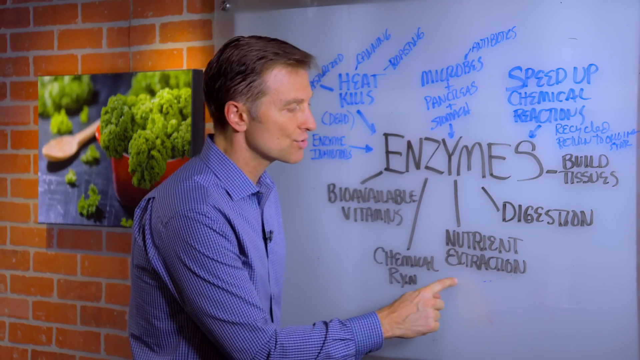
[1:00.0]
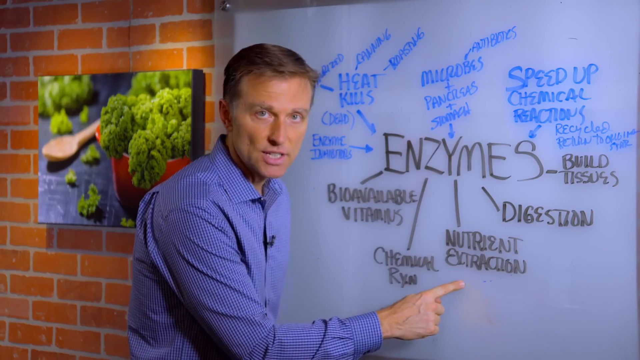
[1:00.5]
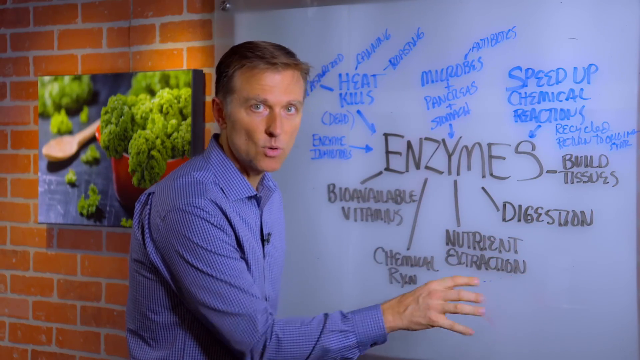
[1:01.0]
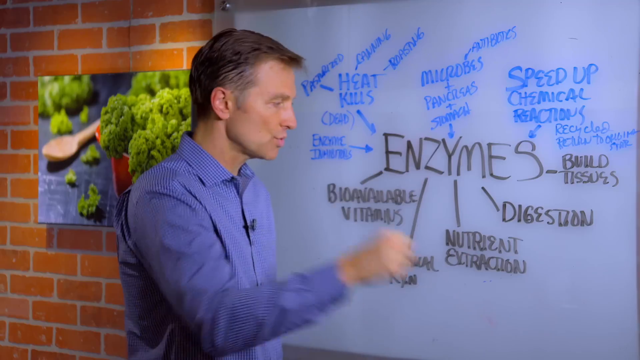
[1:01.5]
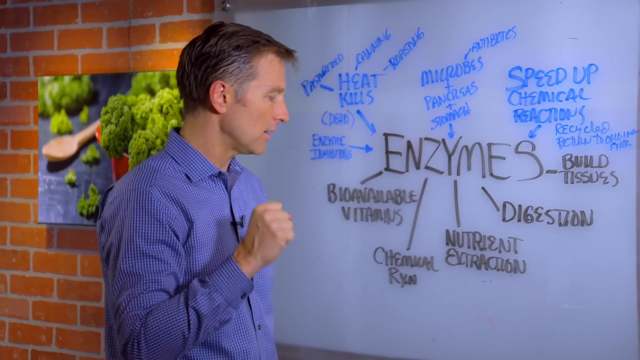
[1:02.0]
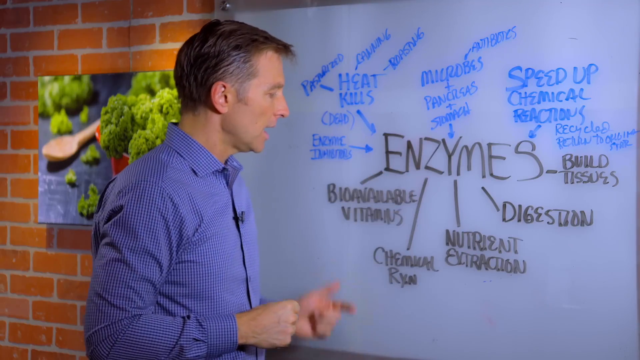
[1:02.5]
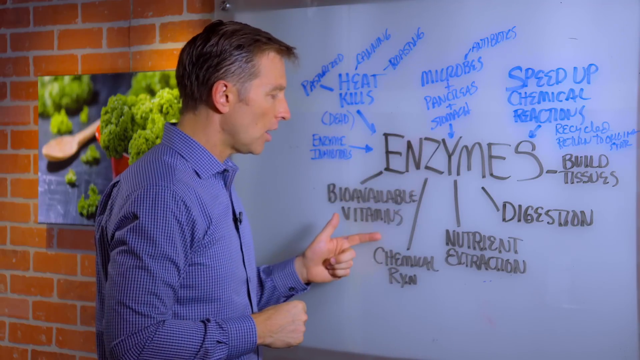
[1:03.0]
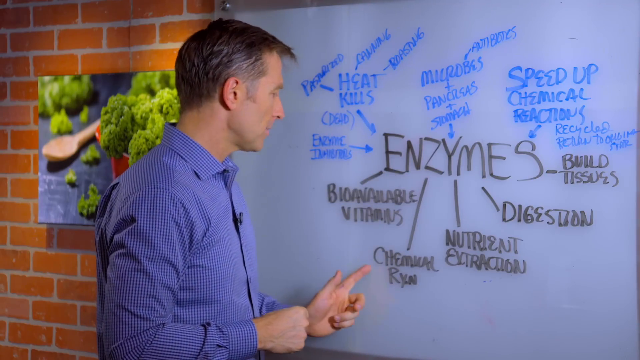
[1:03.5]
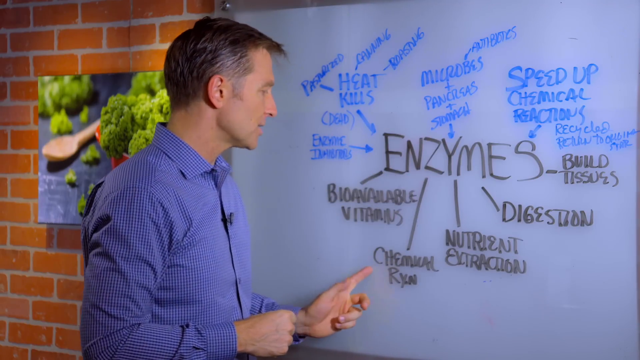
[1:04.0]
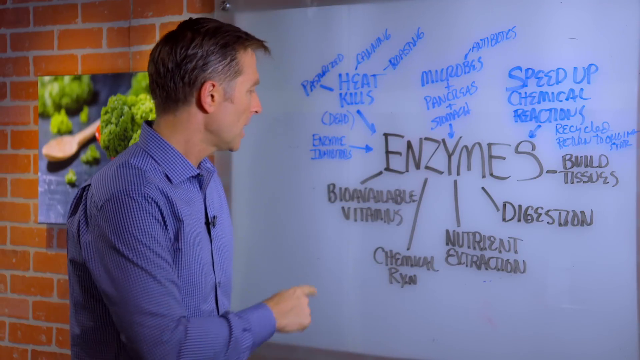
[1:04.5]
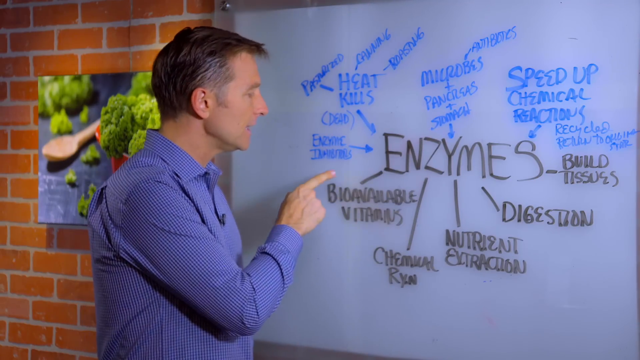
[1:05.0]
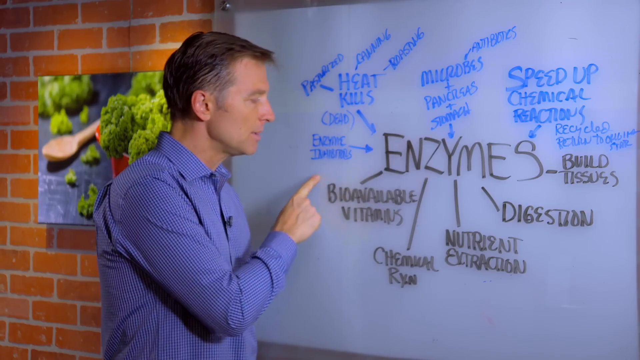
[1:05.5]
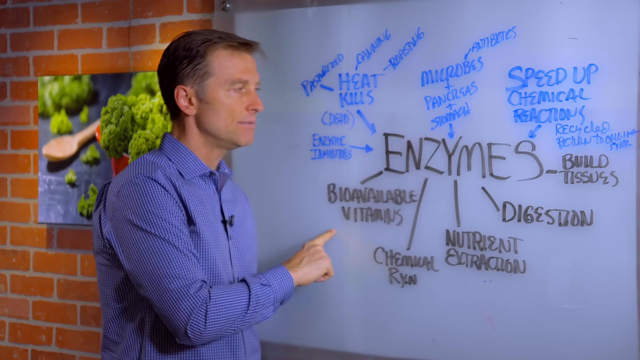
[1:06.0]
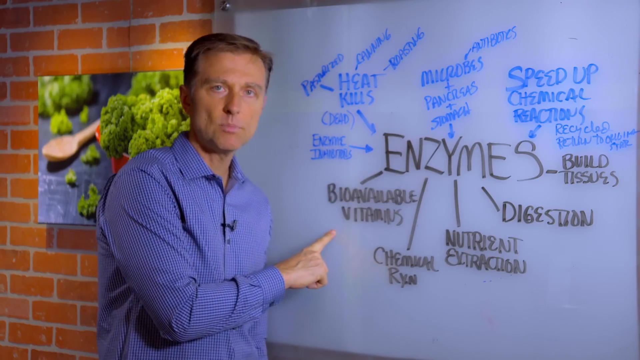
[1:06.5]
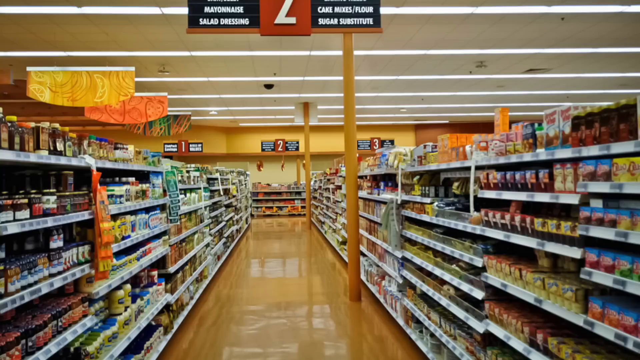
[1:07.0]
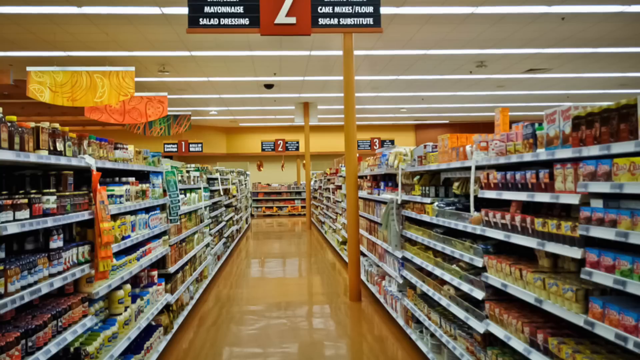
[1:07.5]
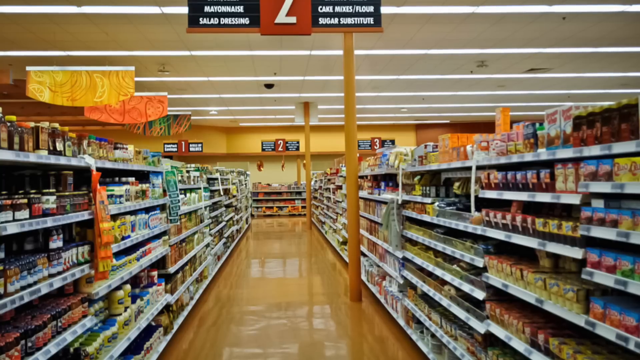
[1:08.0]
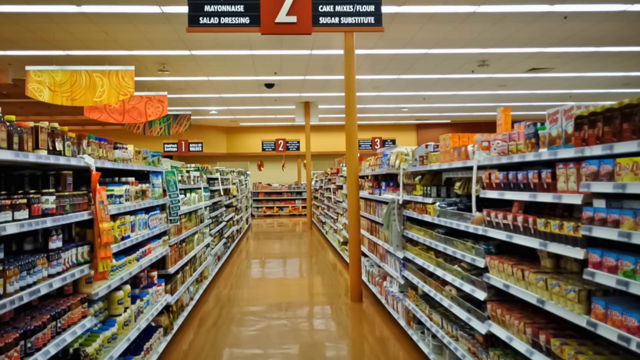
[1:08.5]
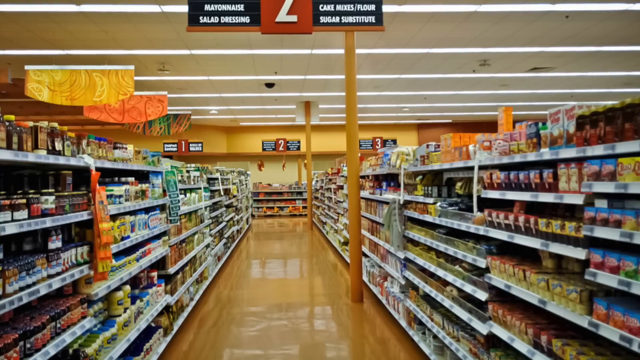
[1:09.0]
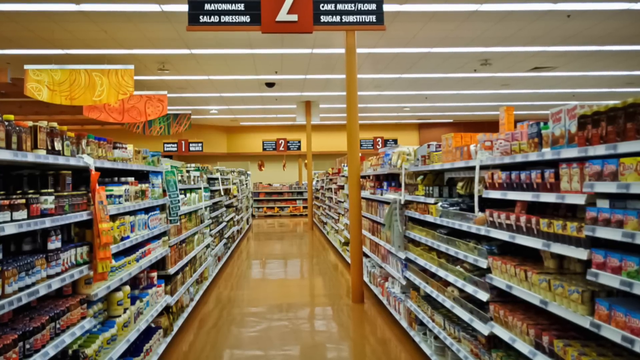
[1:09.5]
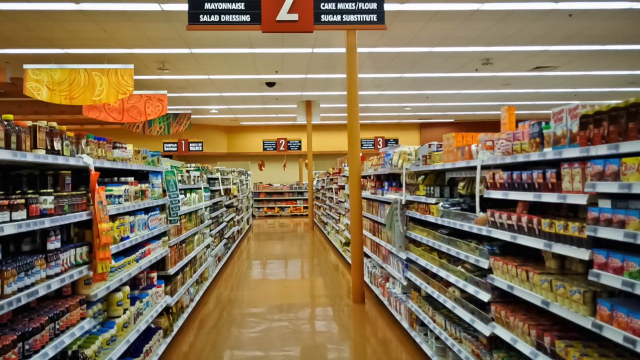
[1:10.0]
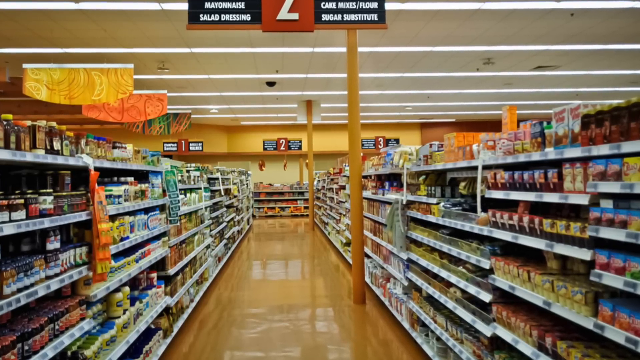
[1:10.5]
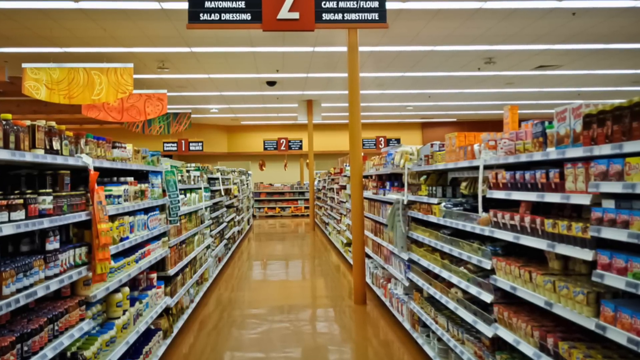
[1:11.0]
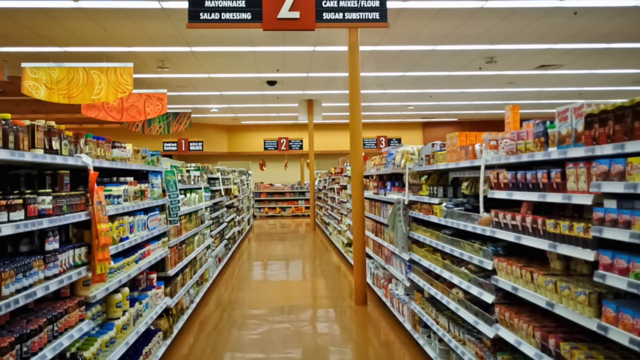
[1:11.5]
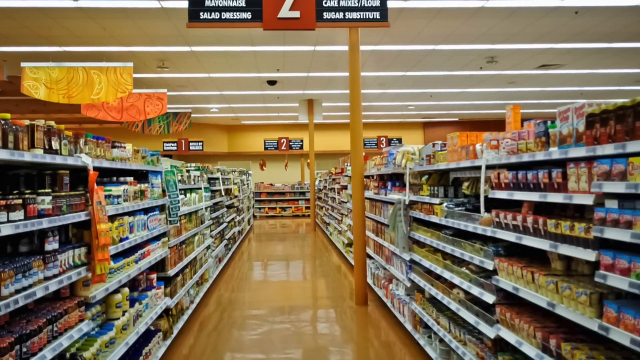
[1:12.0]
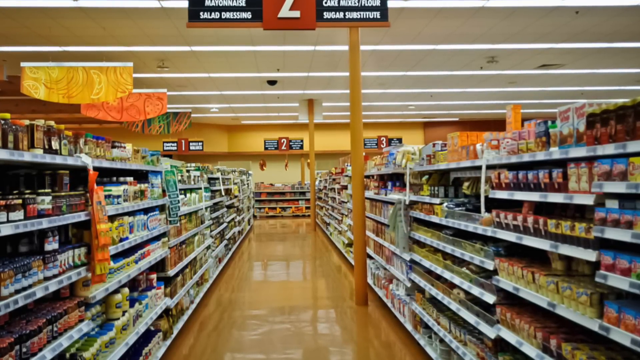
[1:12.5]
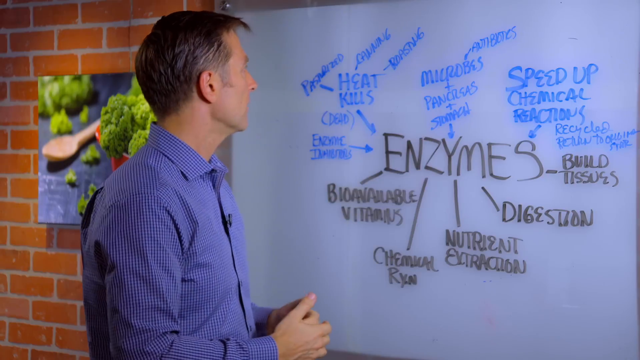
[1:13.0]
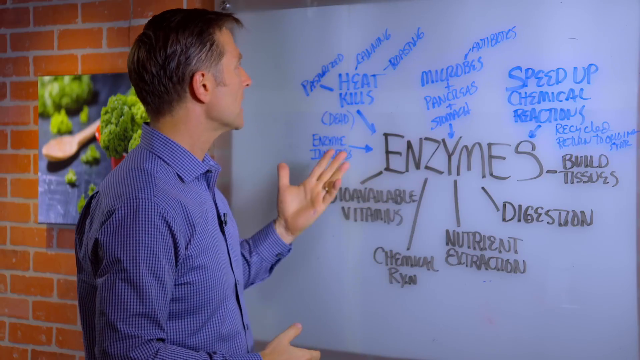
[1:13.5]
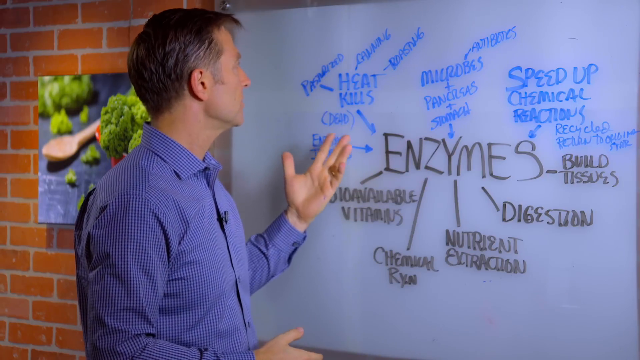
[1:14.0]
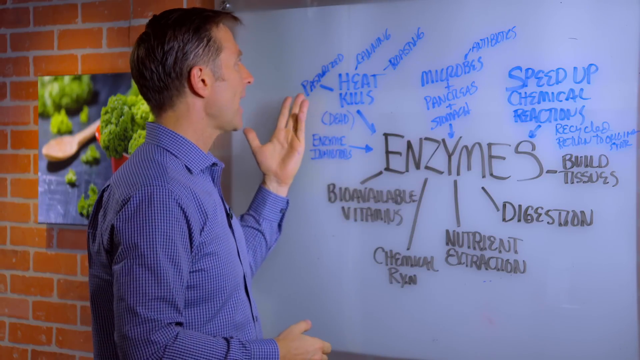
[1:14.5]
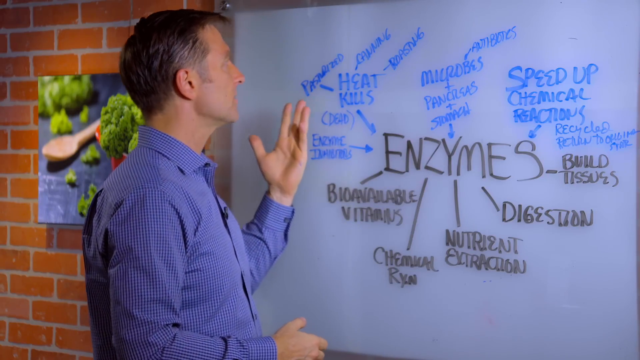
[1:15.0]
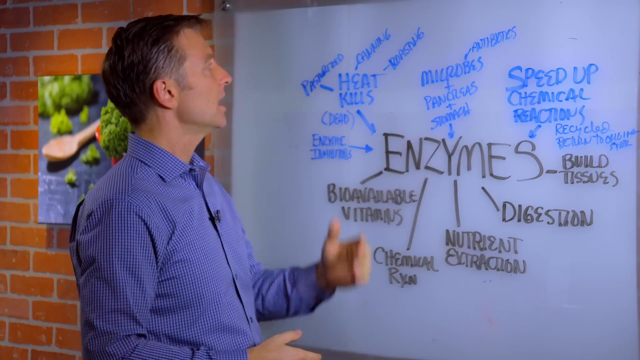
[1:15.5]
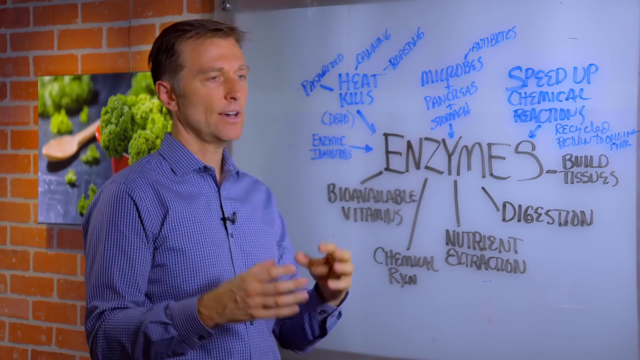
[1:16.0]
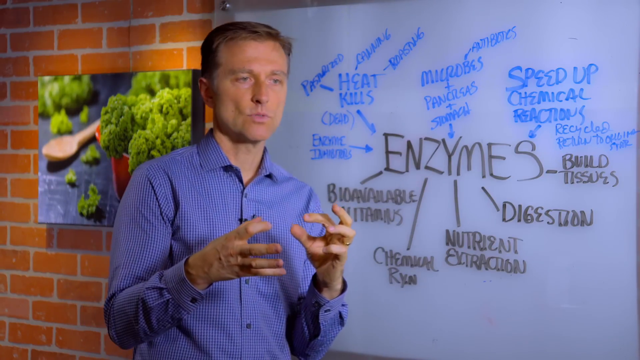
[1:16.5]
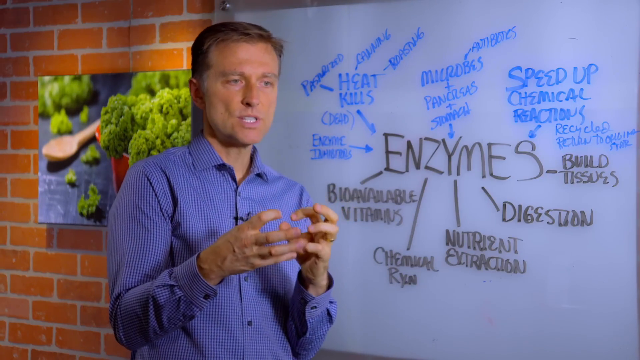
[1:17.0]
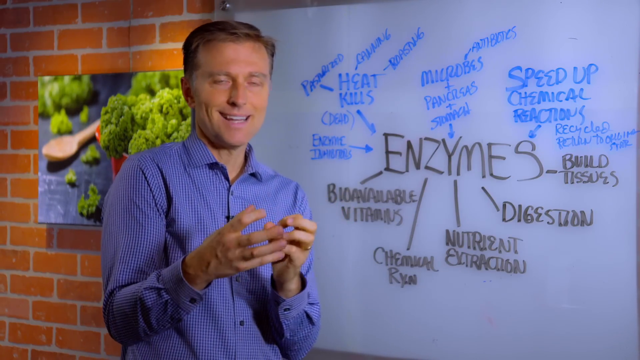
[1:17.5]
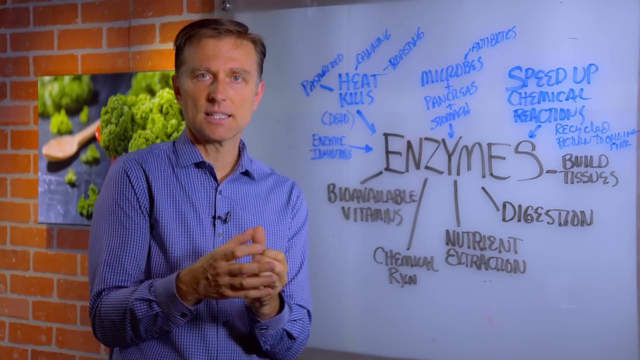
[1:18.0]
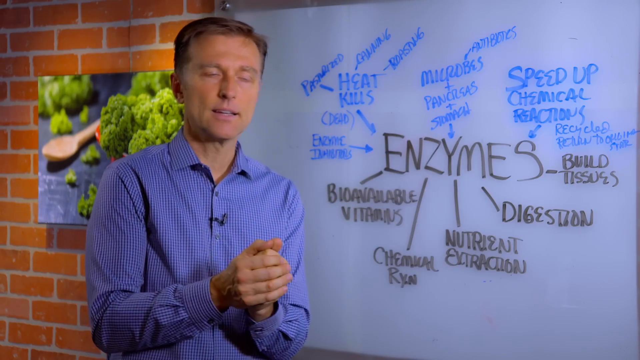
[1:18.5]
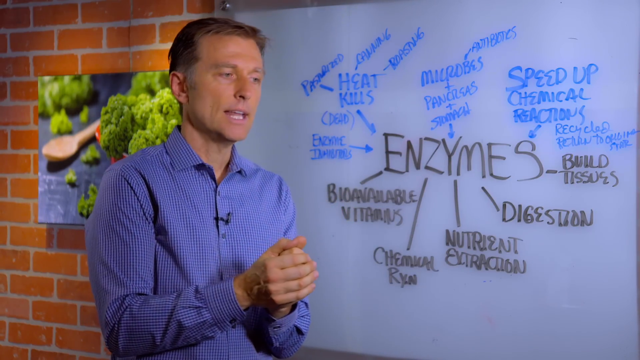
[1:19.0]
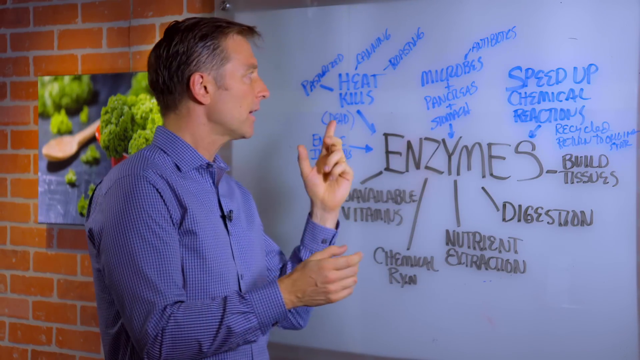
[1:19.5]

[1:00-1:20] The man pantomimes grabbing something out of the air and pulling it toward himself. An image of a supermarket aisle then appears, filled with many products. On the left side are mayonnaise, salad dressing, many kinds of salsas and sauces of all kinds; on the other side are some kind of cake, dough, flour, sugar and substitutes. It is the second aisle, with the number two visible, and on the roof there are some kind of banners with bananas and strawberries. The video then returns to the man in the square blue shirt.